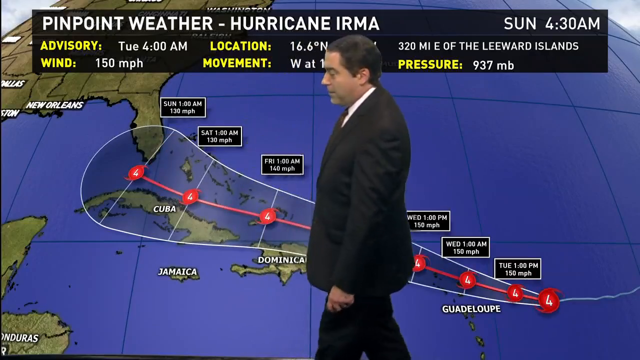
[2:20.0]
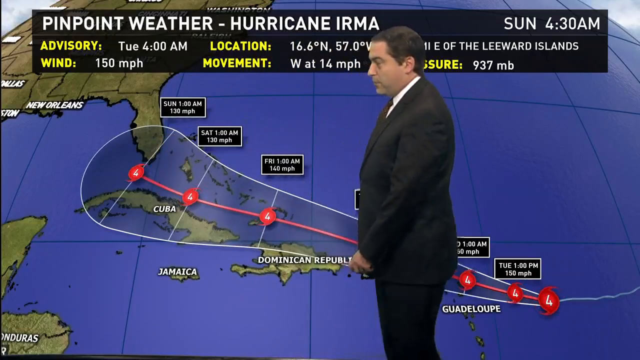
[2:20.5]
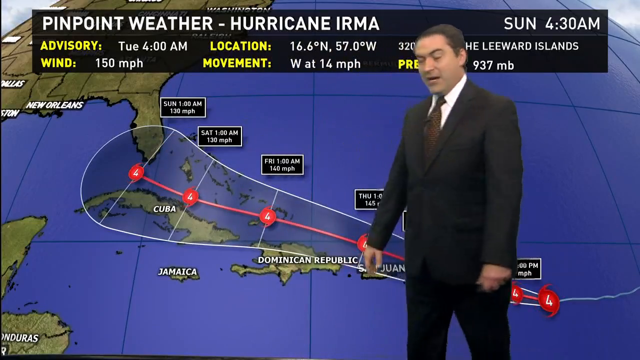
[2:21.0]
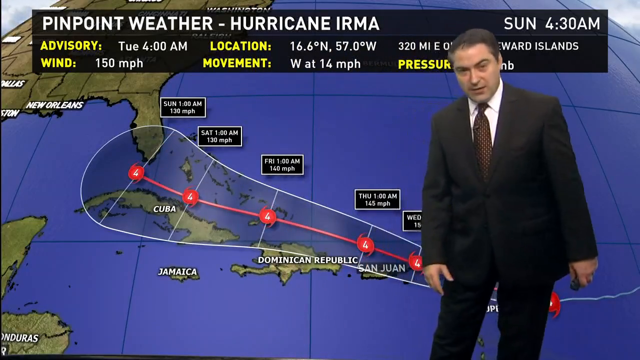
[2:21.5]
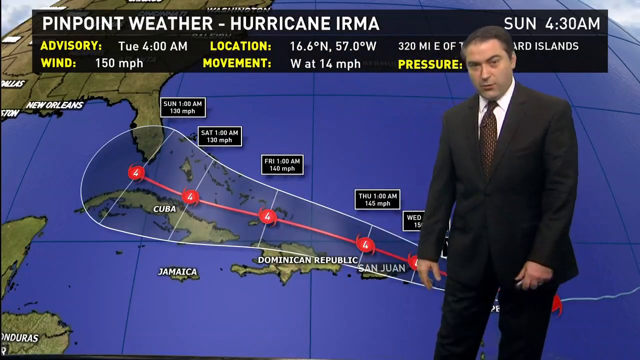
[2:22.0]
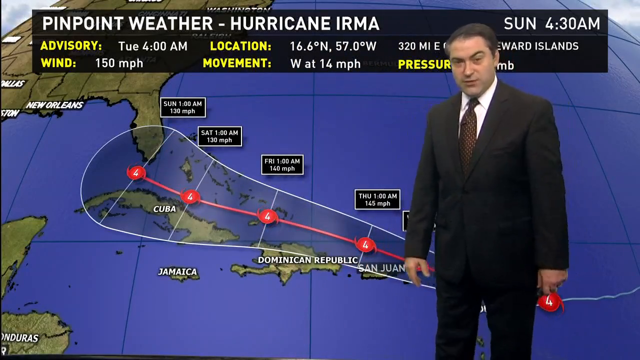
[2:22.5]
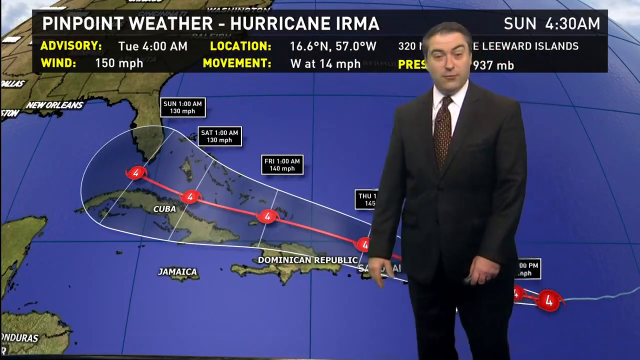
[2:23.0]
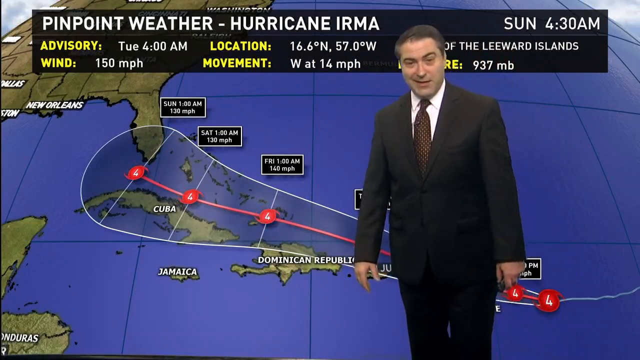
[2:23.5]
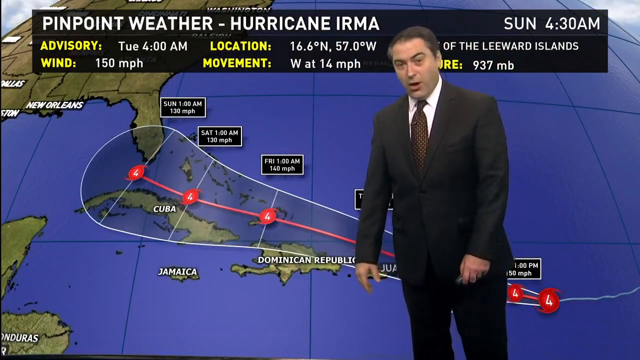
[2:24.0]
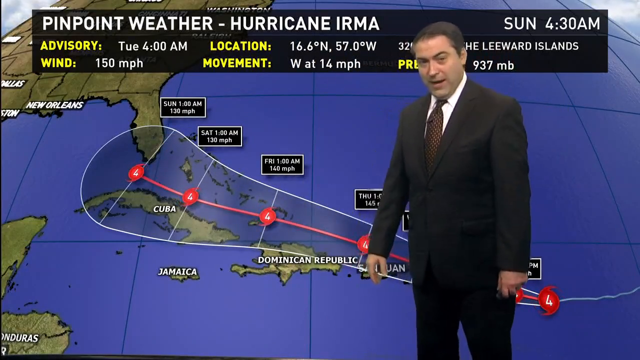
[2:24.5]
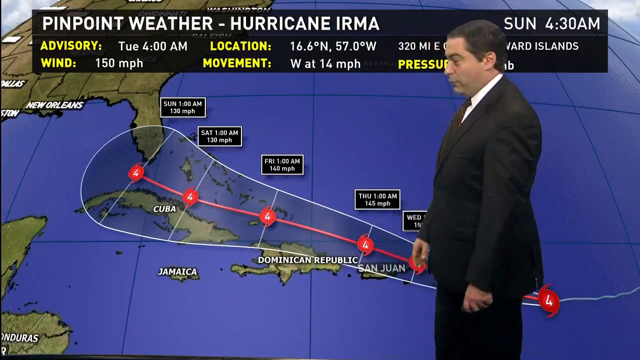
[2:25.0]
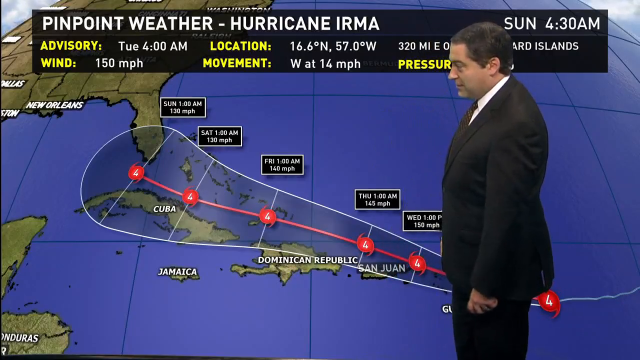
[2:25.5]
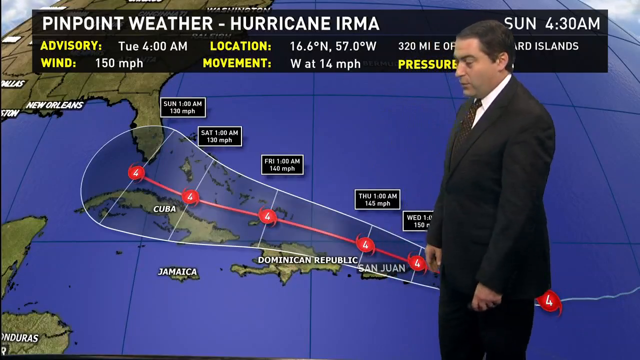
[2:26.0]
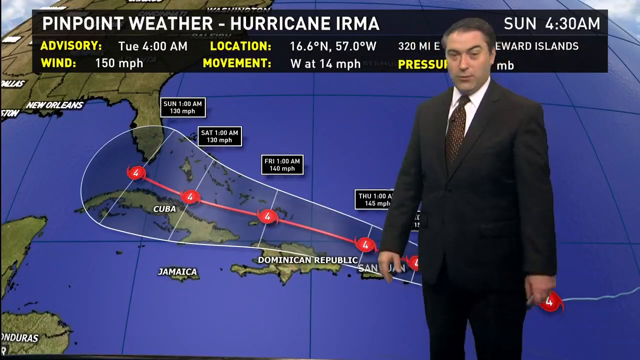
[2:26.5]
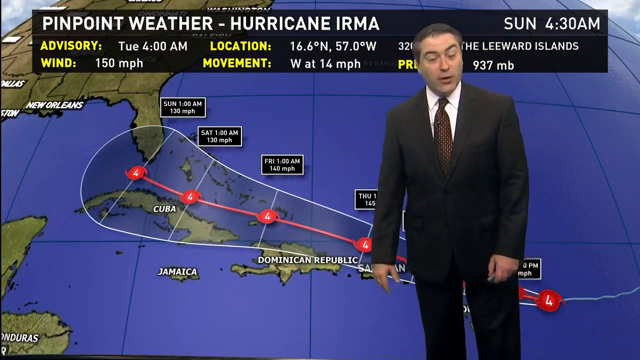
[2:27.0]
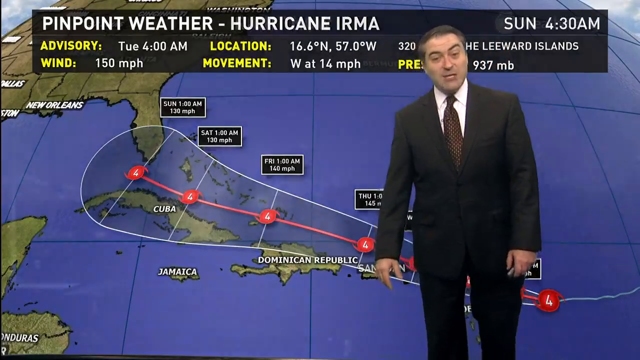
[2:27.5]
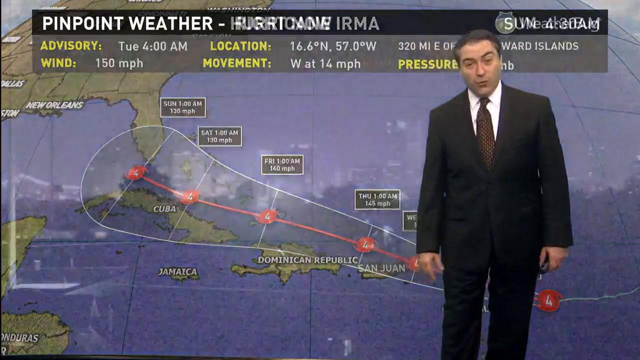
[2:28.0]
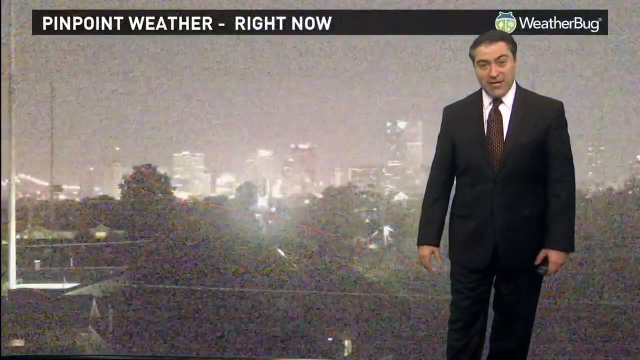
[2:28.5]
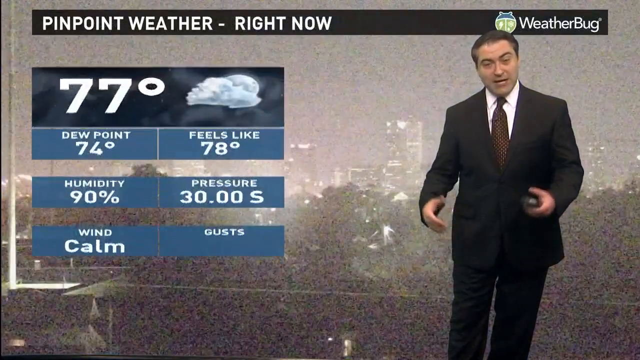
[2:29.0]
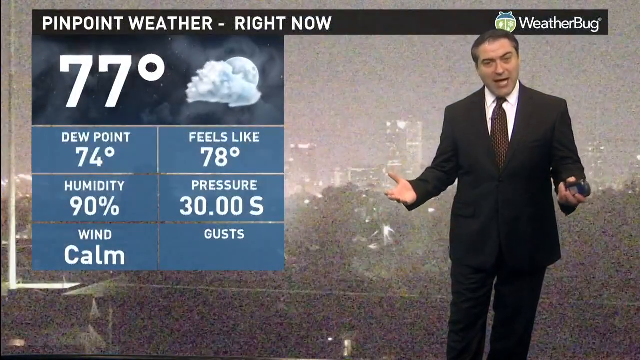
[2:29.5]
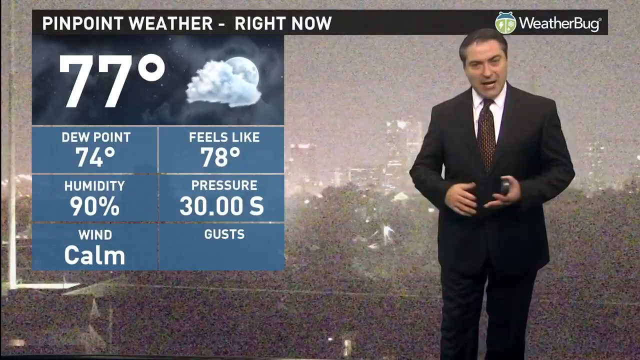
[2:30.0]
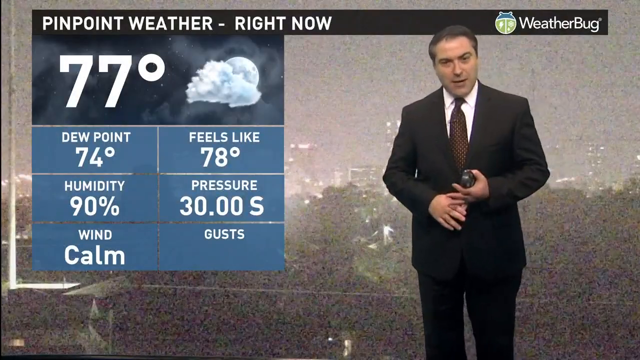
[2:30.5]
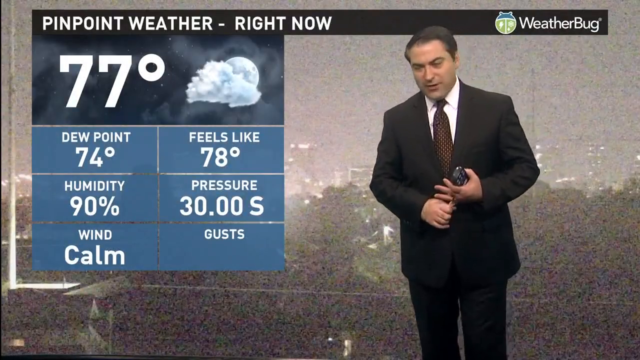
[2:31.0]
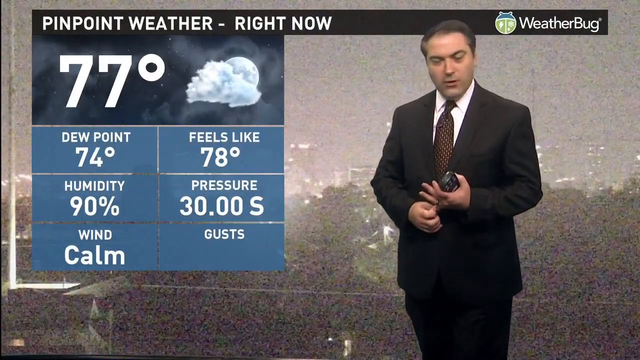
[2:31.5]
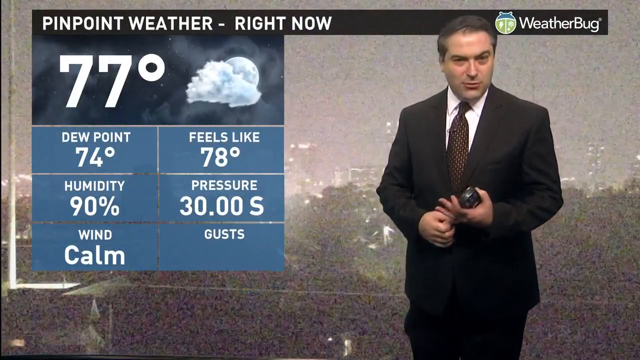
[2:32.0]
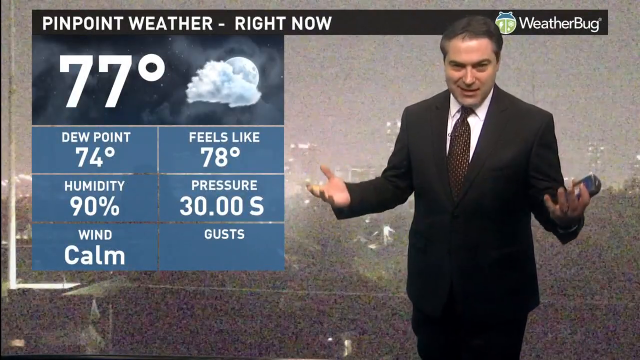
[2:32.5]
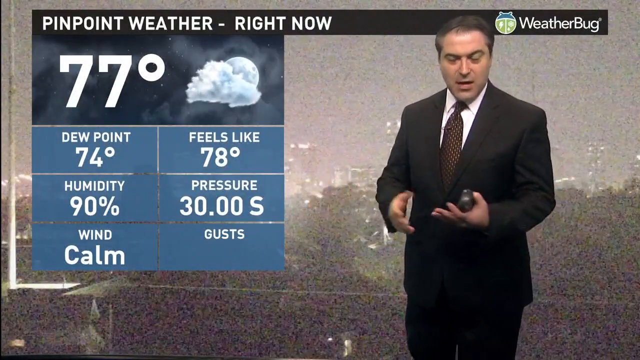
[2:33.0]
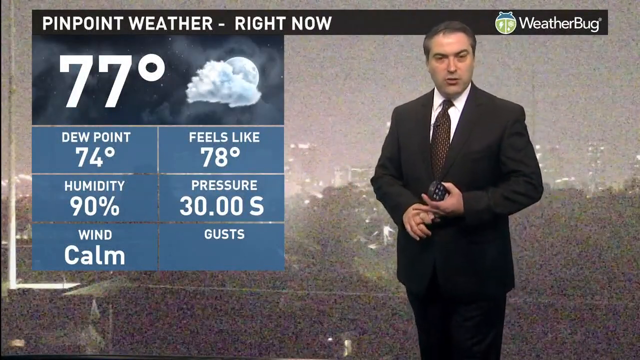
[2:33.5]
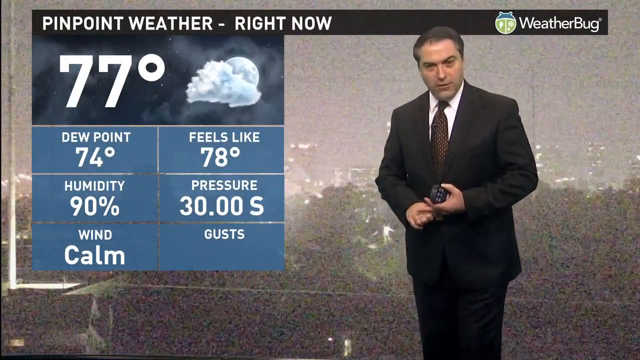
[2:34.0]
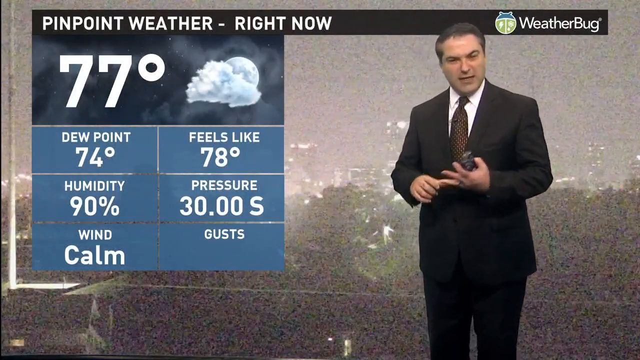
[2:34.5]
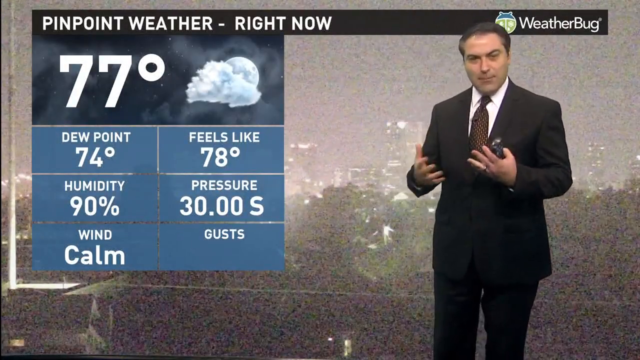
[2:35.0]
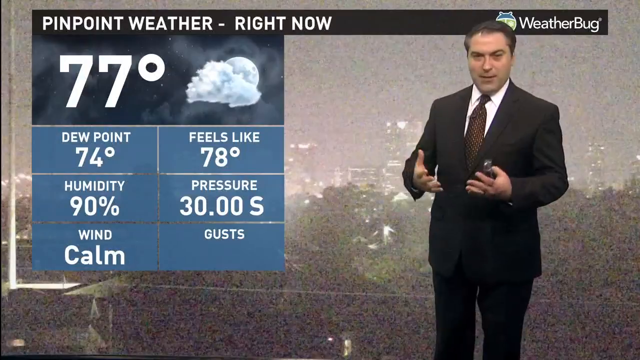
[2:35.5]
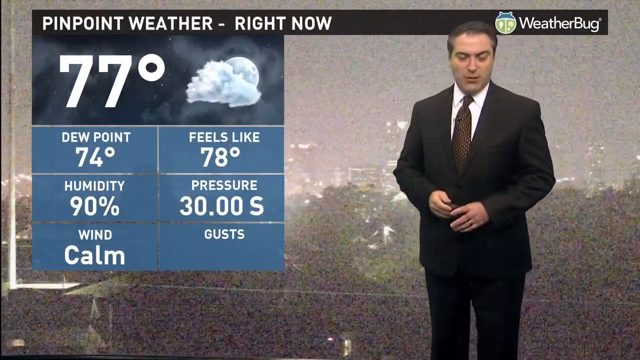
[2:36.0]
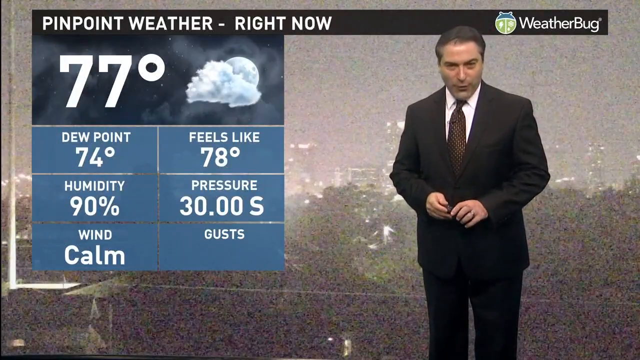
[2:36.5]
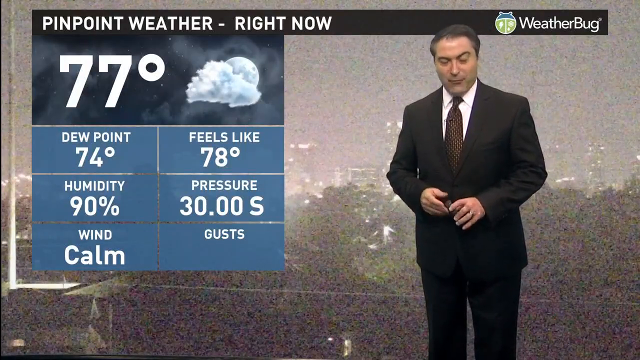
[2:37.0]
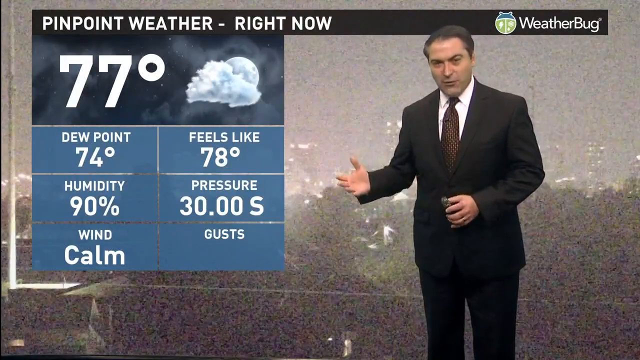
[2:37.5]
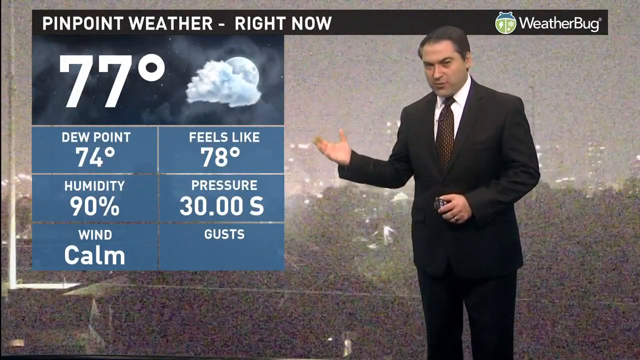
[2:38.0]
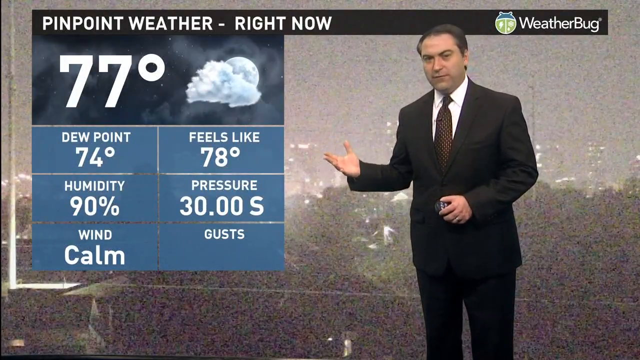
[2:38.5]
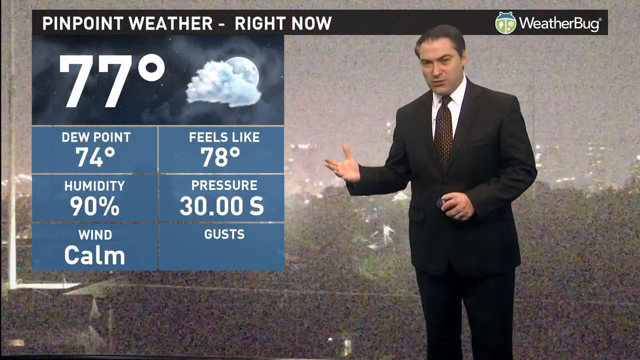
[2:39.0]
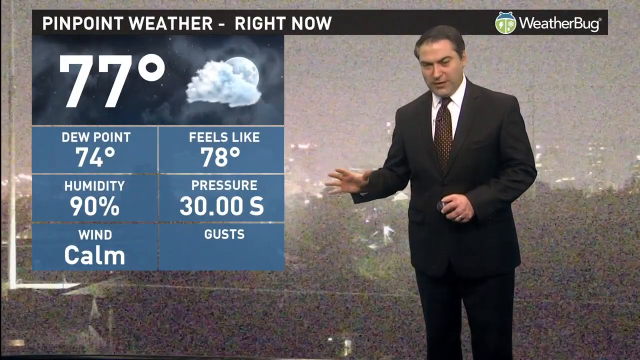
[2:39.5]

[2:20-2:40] The weatherman looks at the category map of Hurricane Irma behind him, showing a Category 4 hurricane all the way from Guadalupe to right over the Florida Keys. He steps backwards, turns to face the camera and talks, sort of swaying back and forth a little. The map then changes to "pinpoint weather right now on weather bug", showing 77 degrees, cloudy, with a moon suggesting it appears to be nighttime, dew point 74, feels like 78, humidity 90 percent, pressure 30.00 S, wind calm and gusts zero. Facing the camera, he puts his hands together, sort of interlinking his fingers a little, while stepping back and forth slowly. He then gestures back and forth with his hands and points towards the box with the weather information while speaking to the camera.